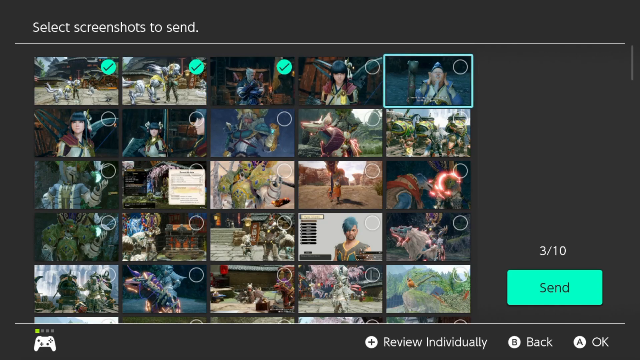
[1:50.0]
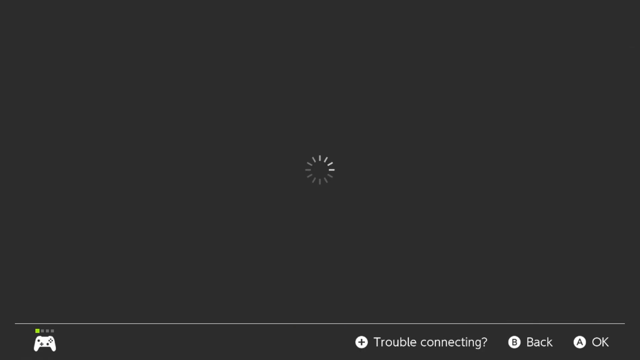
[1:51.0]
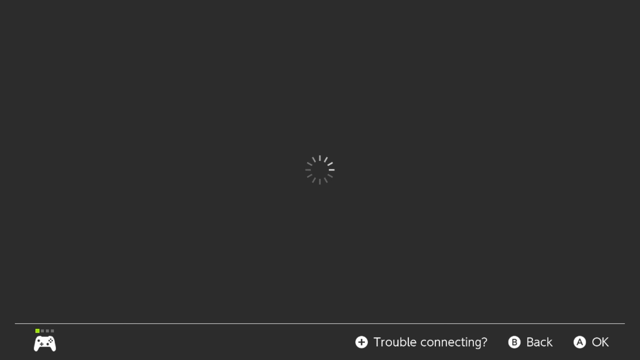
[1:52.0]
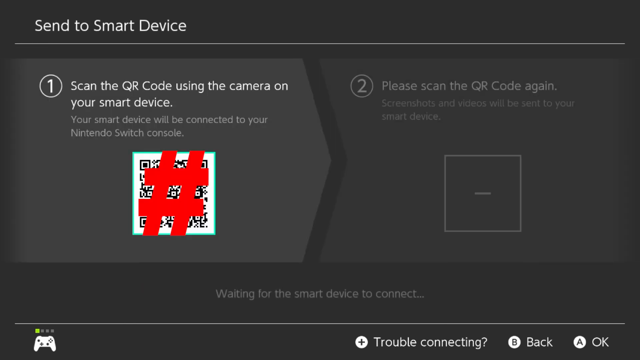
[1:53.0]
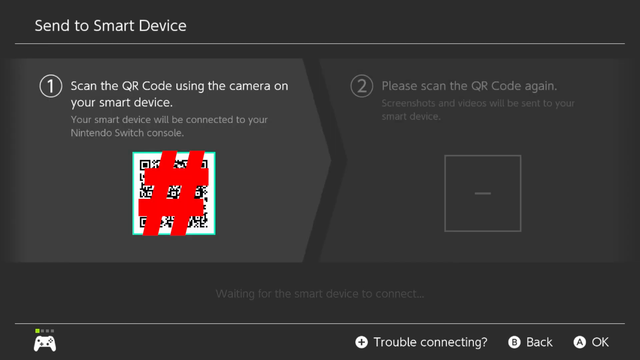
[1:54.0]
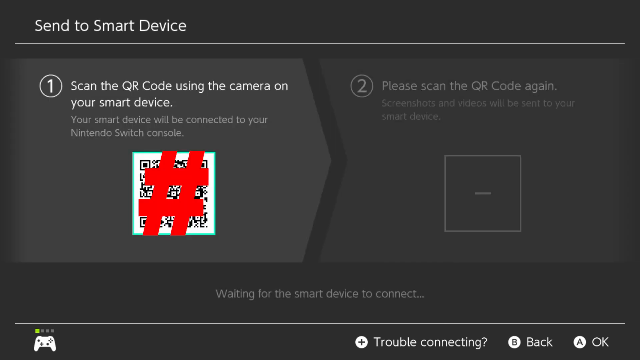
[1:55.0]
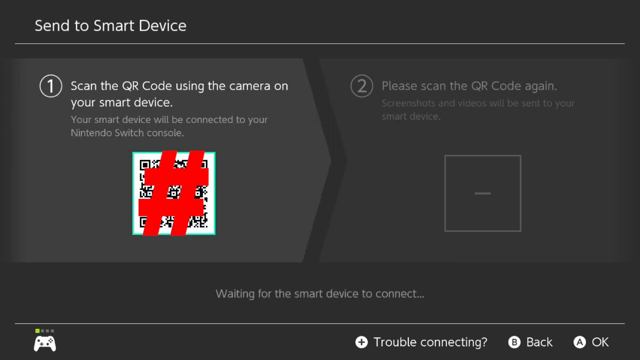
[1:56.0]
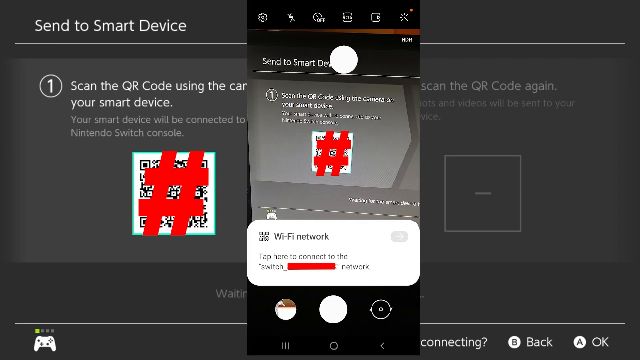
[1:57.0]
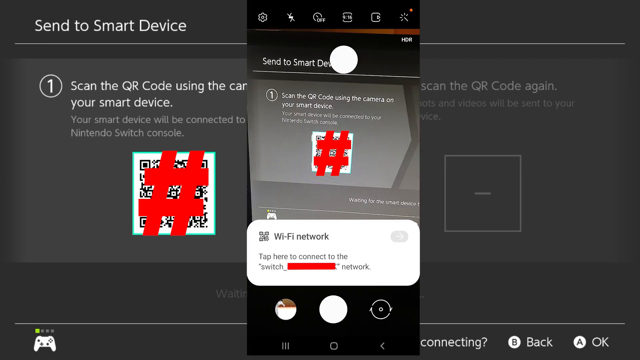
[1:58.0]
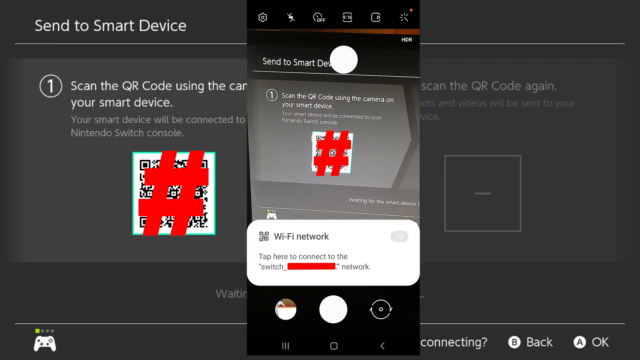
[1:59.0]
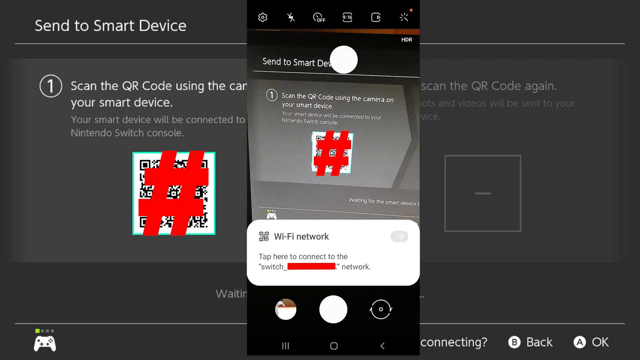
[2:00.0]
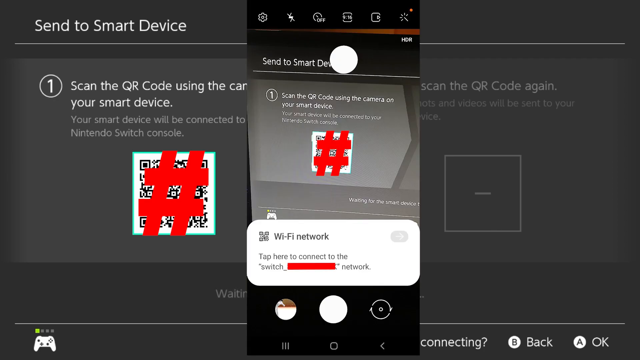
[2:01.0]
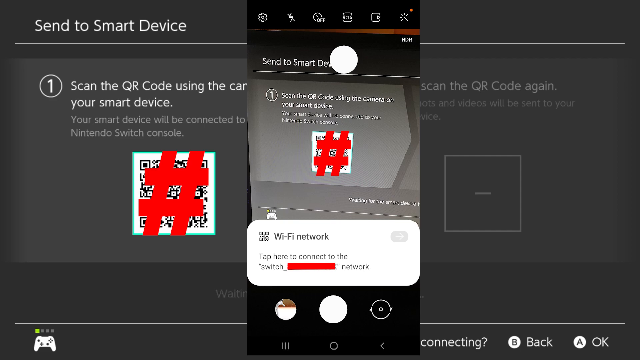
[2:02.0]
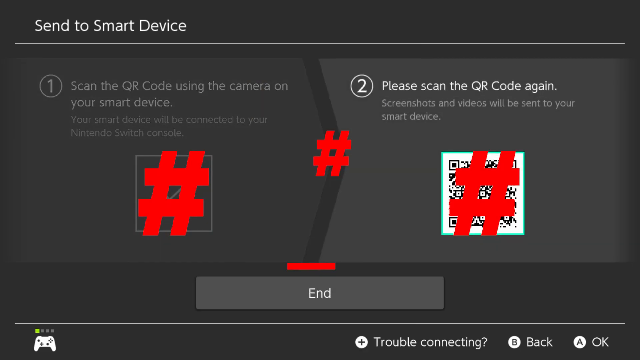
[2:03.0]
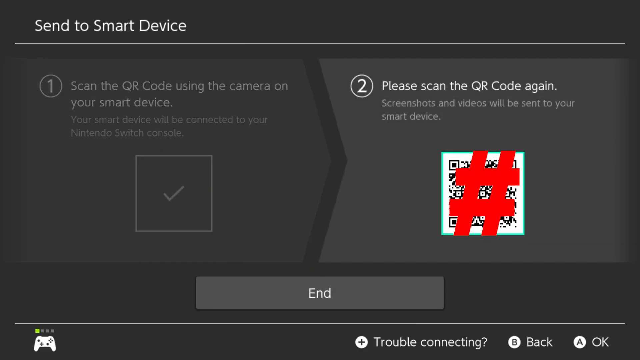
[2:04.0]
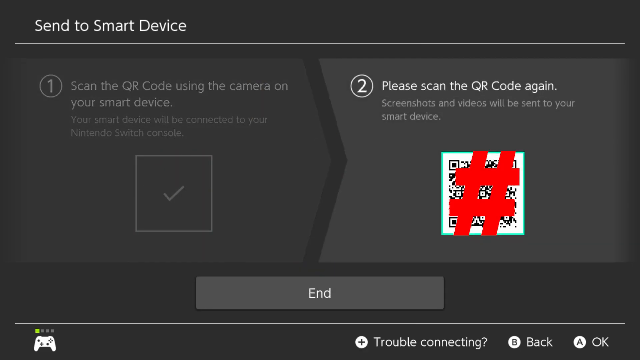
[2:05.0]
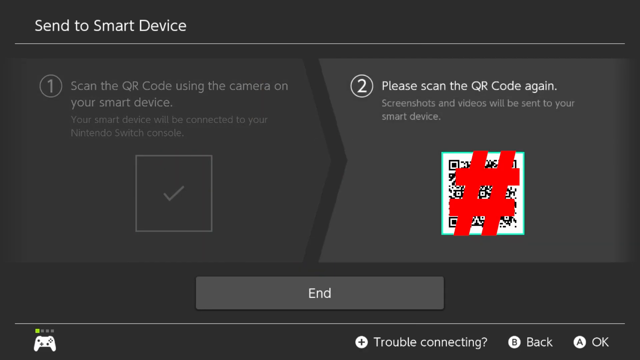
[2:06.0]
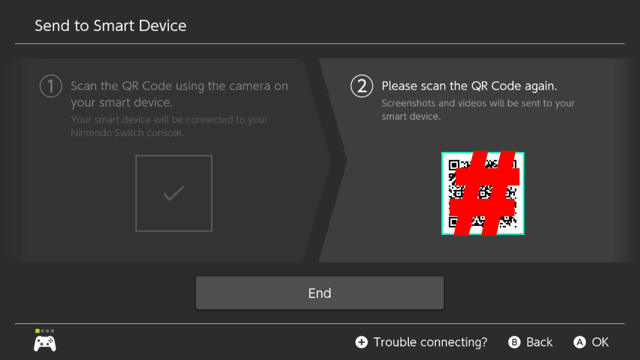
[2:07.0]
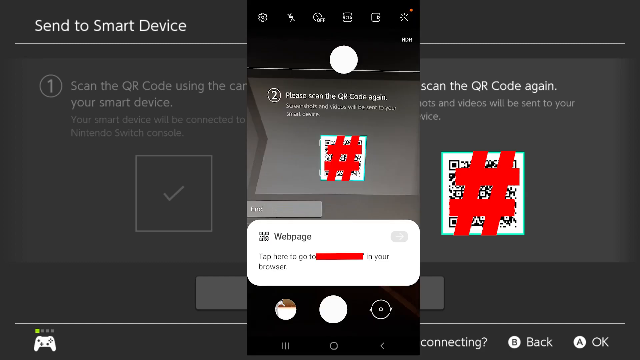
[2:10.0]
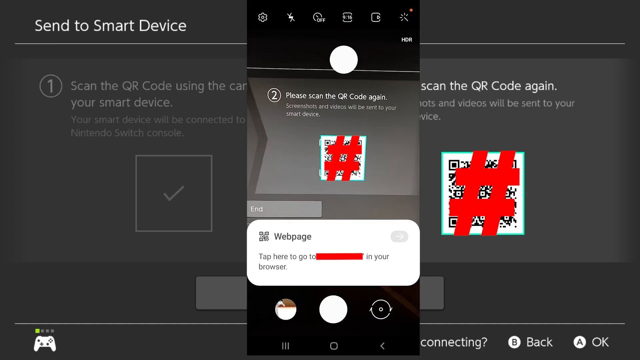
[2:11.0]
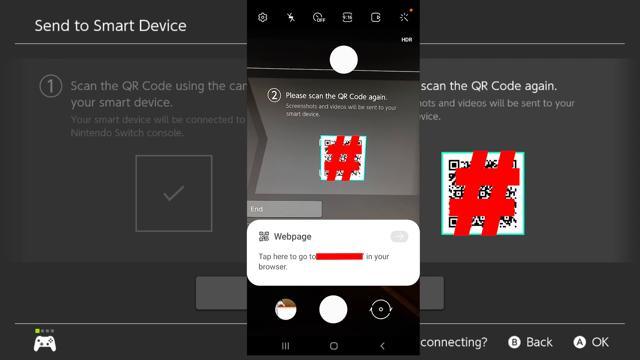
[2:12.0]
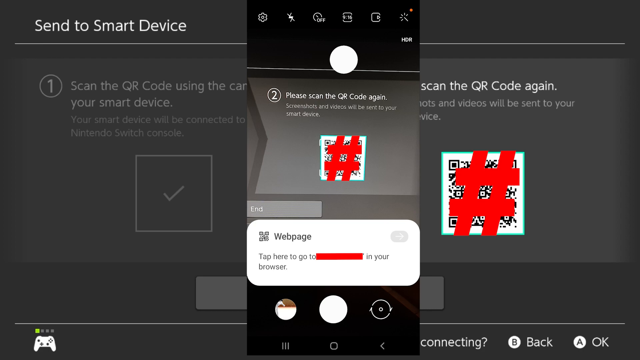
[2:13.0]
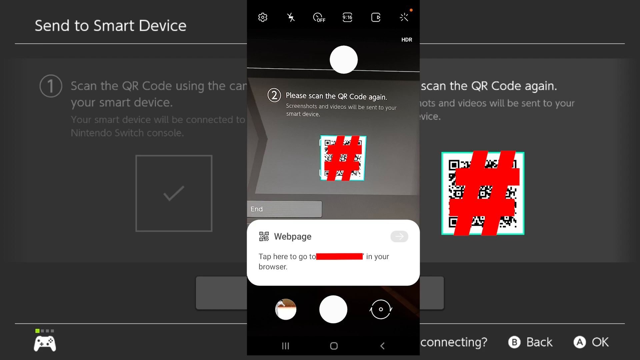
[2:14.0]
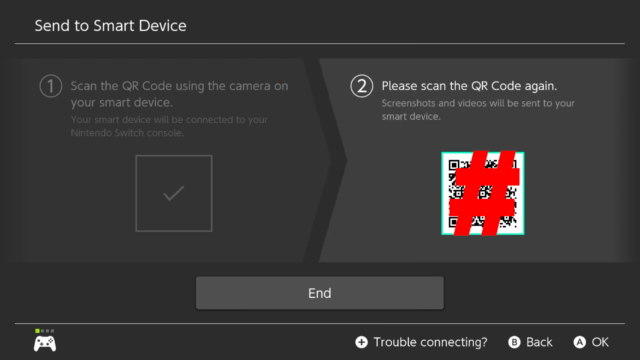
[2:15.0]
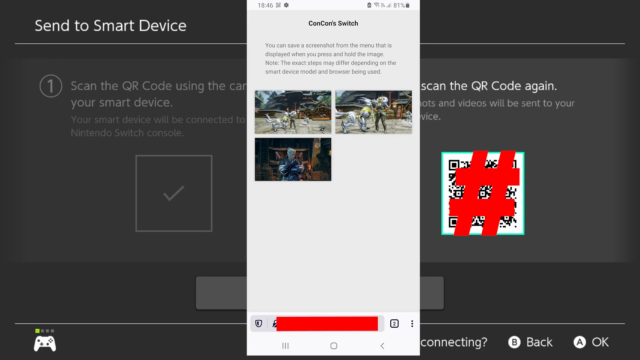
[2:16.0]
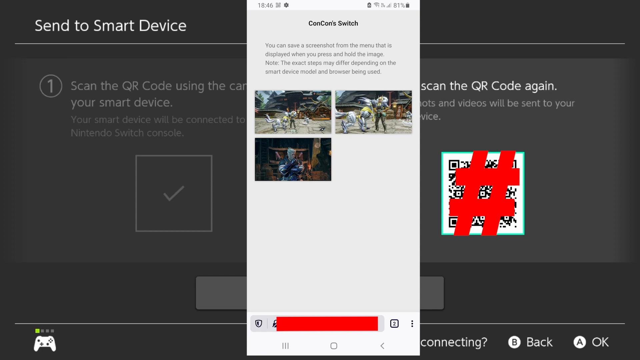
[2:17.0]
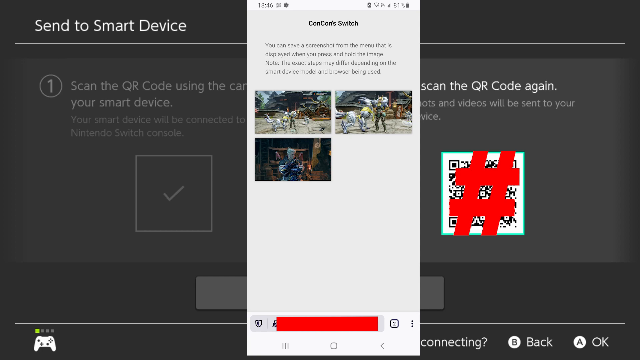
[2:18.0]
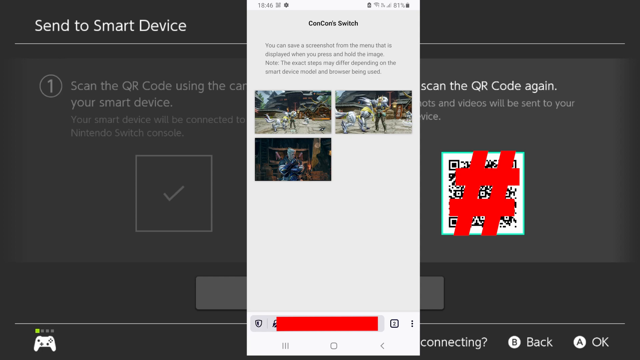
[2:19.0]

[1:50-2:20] Three photos are being sent. The user chooses an option reading "Send" in the lower right portion of the screen. Another window pops up asking to scan the QR code with a smart device to connect the phone to the Switch console. Another layer pops in showing the user's cellphone screen, and the user is shown scanning the QR code with the phone. An option pops up on the phone offering to connect the phone directly to the Switch's Wi-Fi, showing that the QR code has been scanned successfully and the phone is connected. The screen then asks the user to scan a separate QR code to actually send the files, and the user is again shown scanning it with the phone. An option pops up reading "tap here to go to a website within your browser".